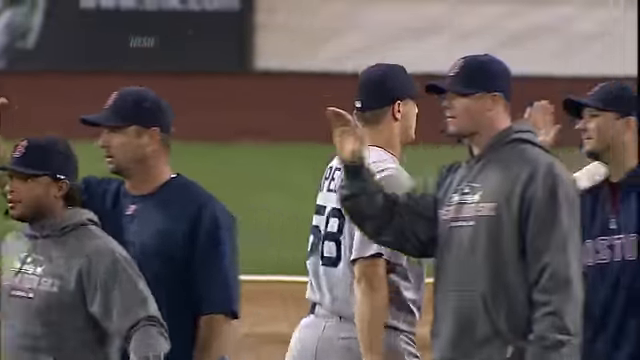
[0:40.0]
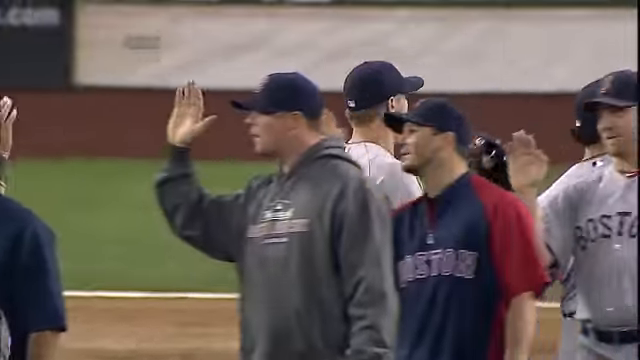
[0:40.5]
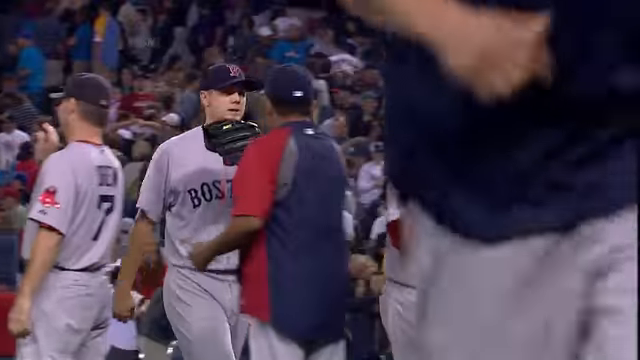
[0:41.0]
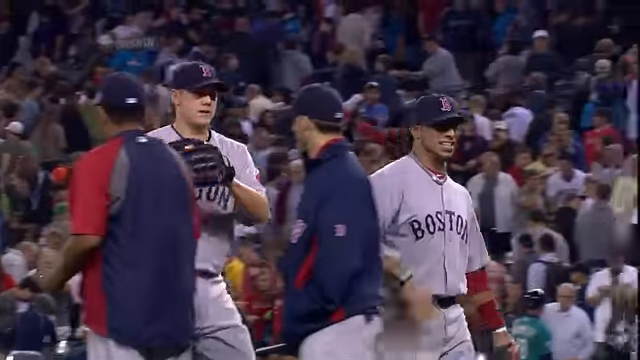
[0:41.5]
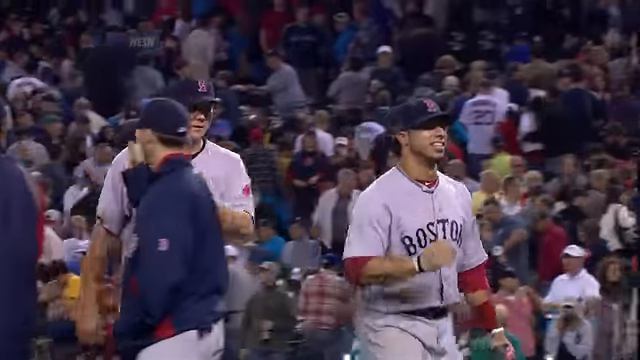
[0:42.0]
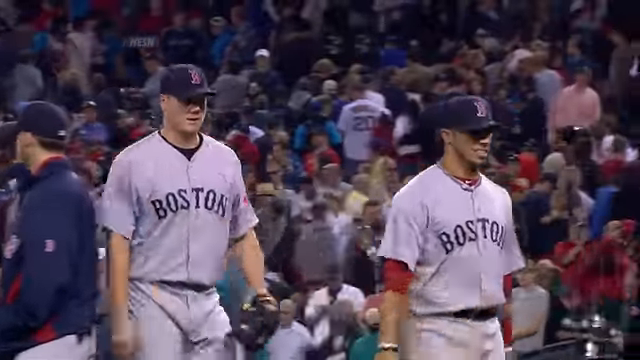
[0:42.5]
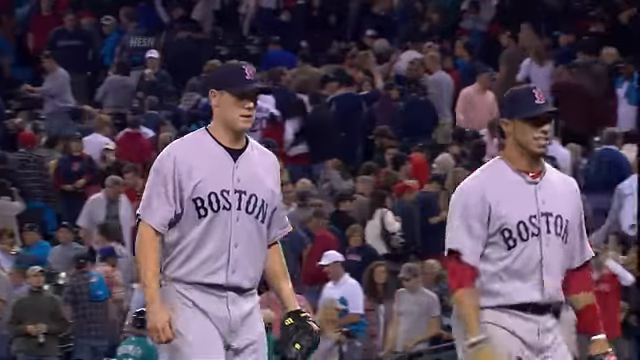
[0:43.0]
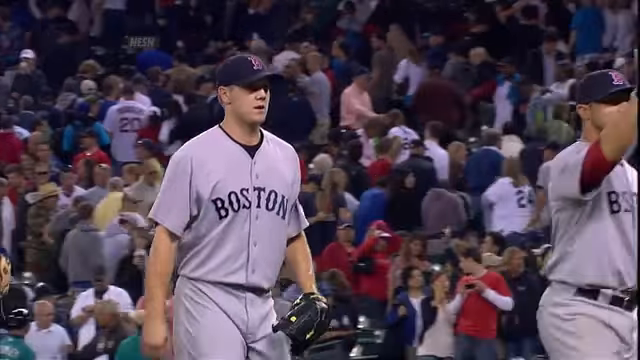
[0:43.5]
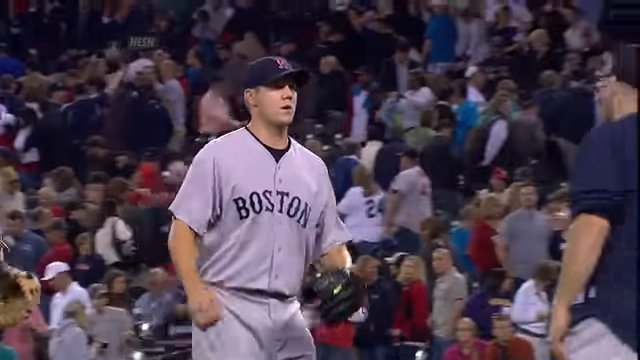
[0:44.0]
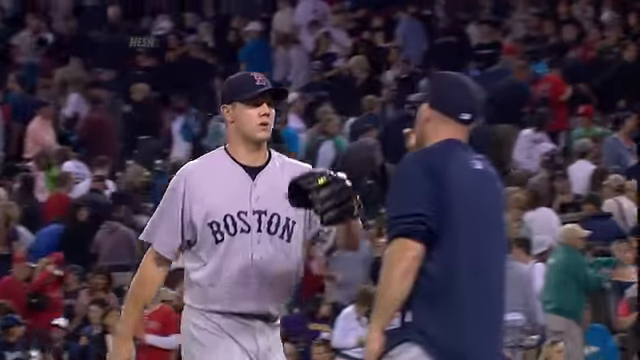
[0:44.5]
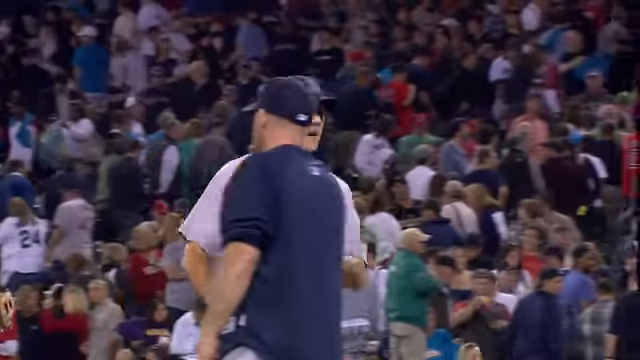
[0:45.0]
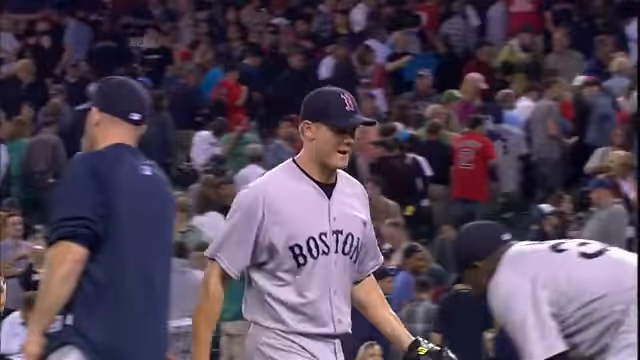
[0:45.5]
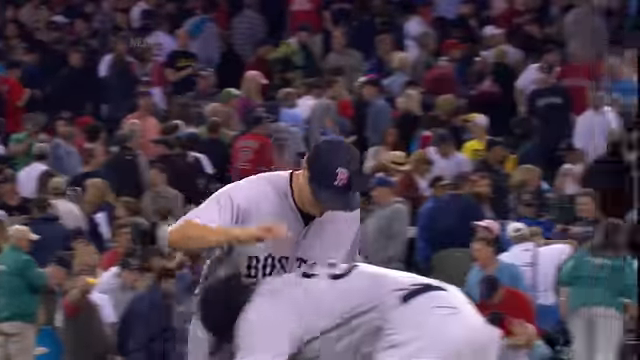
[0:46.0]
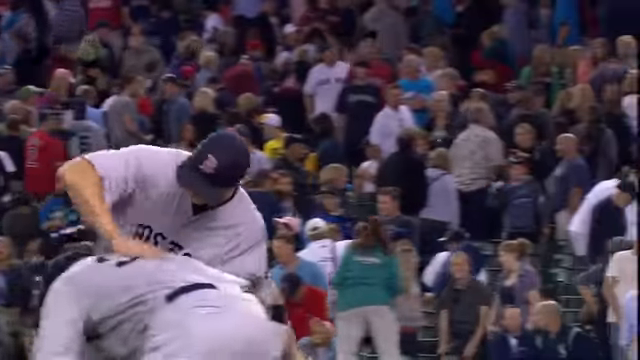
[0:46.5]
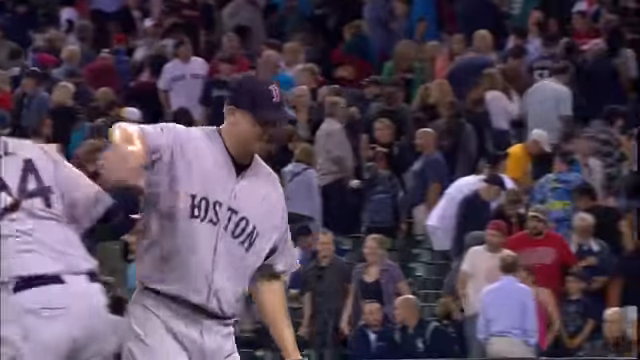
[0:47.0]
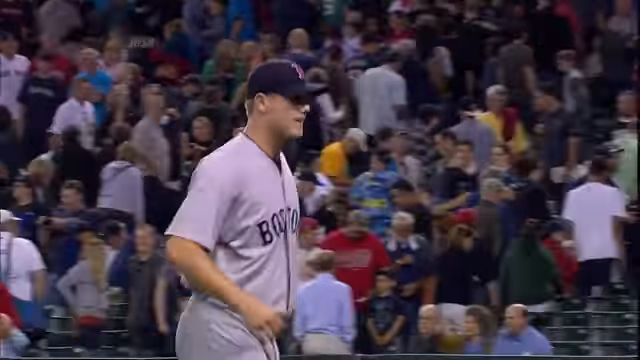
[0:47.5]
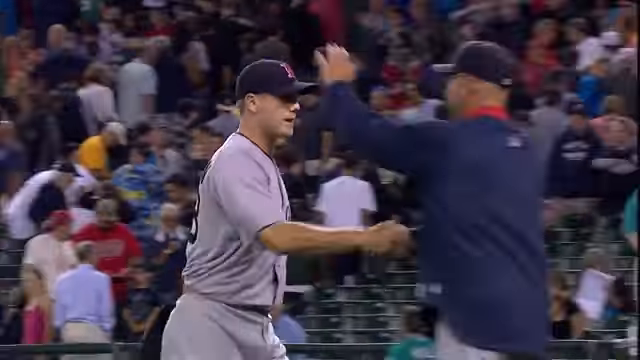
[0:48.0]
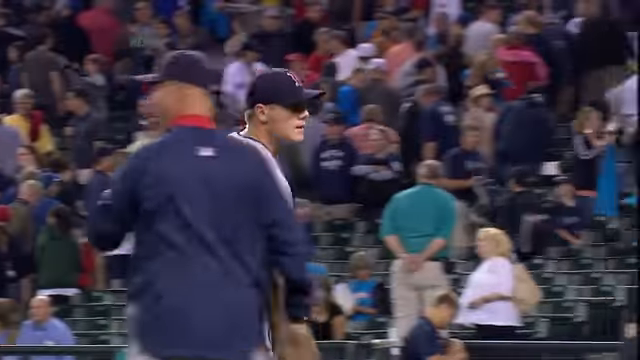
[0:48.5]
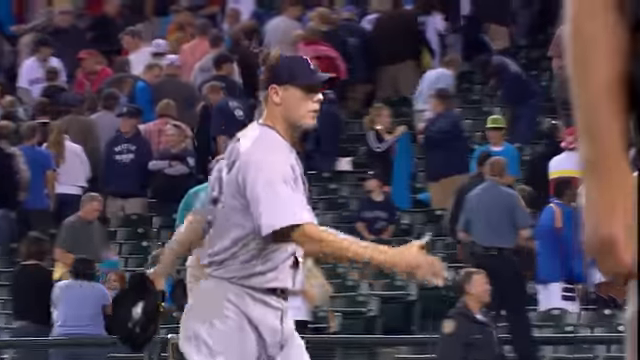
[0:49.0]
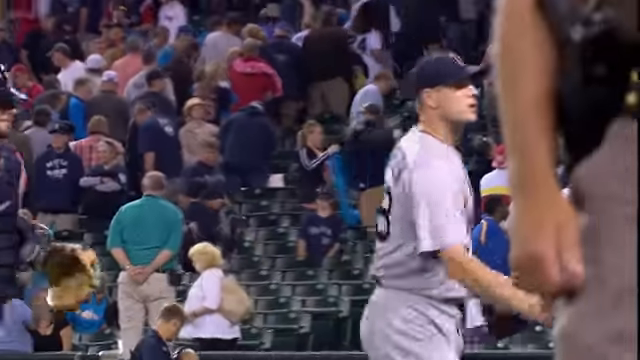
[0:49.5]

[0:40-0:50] The pitcher continues walking to the right side. The view changes to a lower, ground-level view of the pitcher and another Boston teammate walking to the right in a victory line, bumping hands with everyone they walk by. The pitcher pats the back of a teammate who is bending down, then shakes the hand of what looks like a coach. He keeps walking to the right and shakes someone else's hand with his right hand.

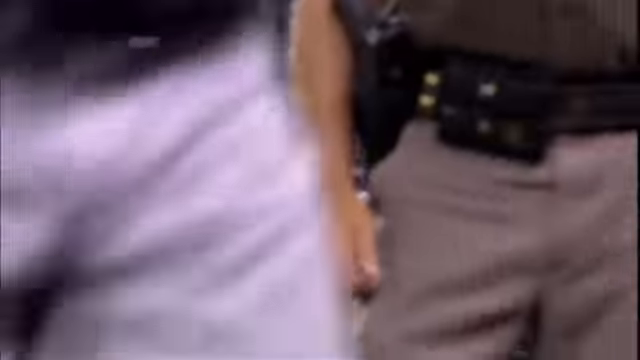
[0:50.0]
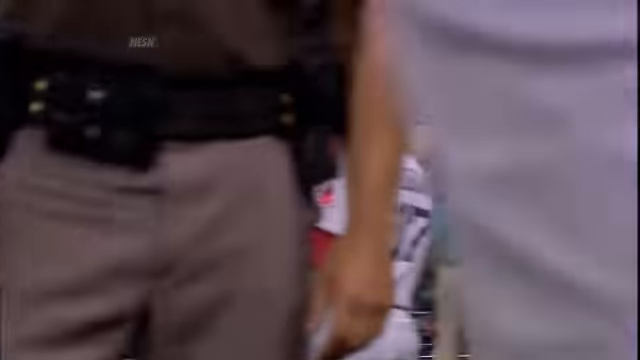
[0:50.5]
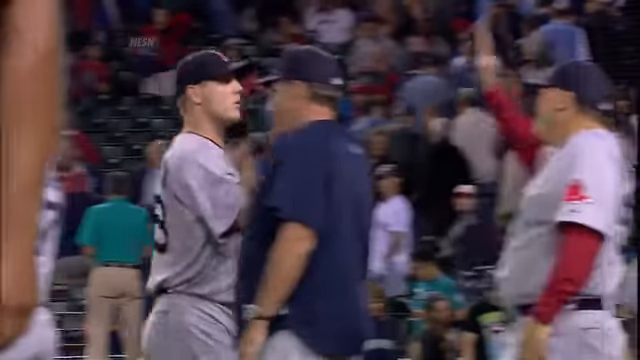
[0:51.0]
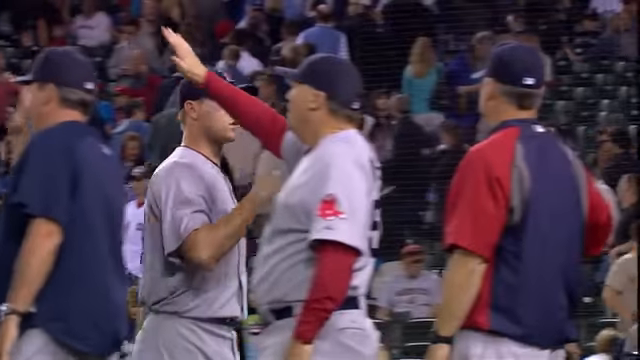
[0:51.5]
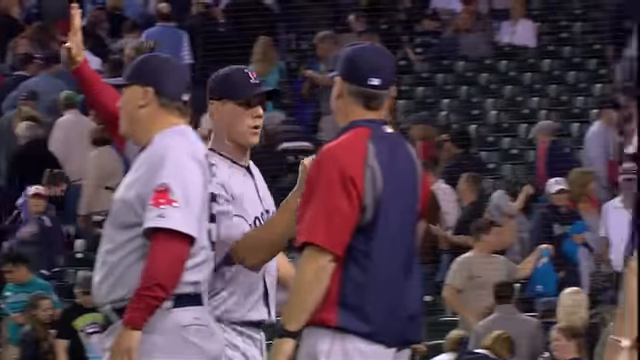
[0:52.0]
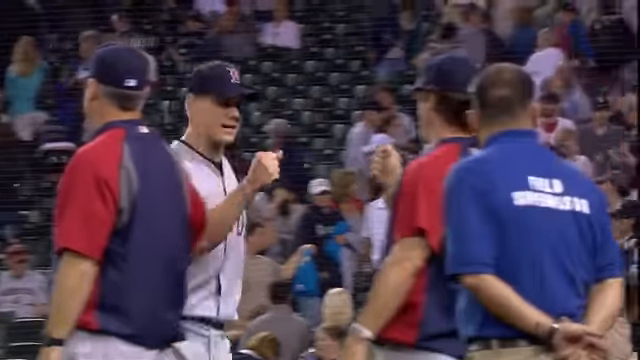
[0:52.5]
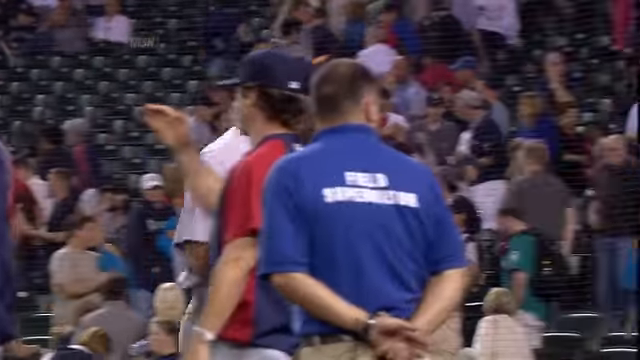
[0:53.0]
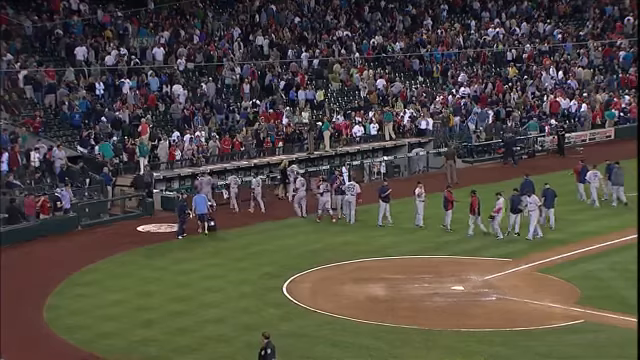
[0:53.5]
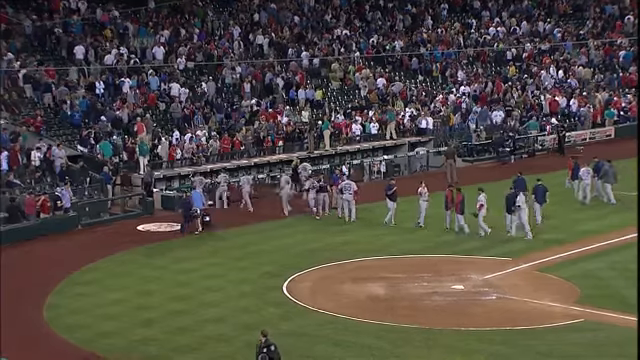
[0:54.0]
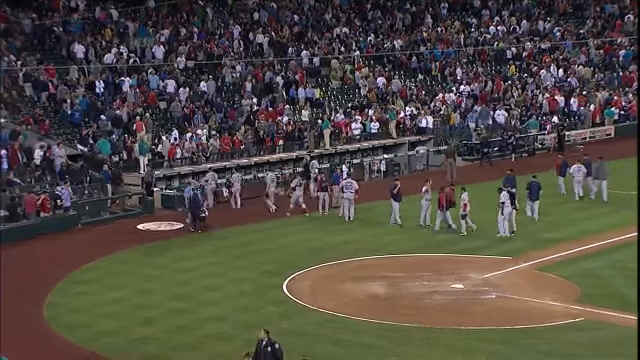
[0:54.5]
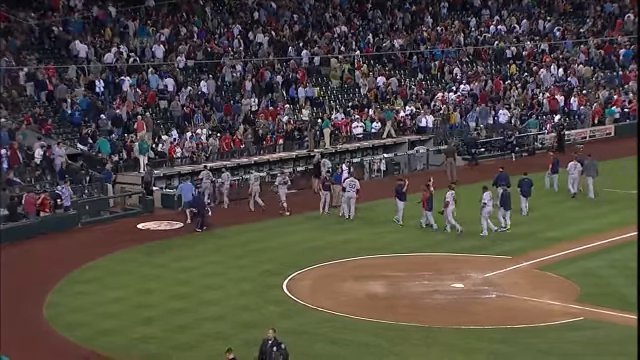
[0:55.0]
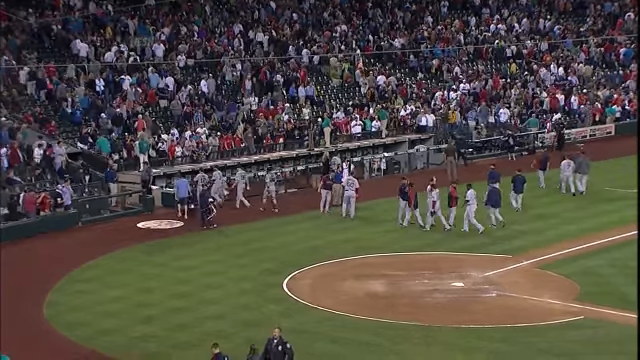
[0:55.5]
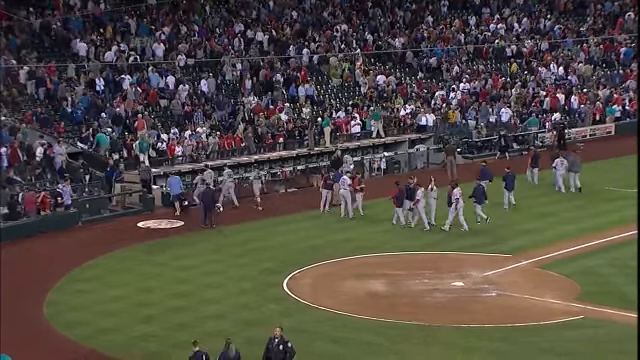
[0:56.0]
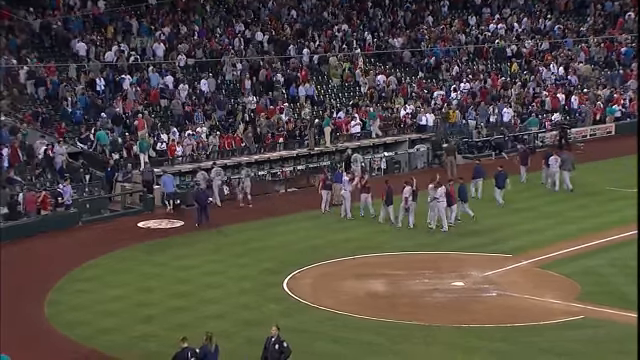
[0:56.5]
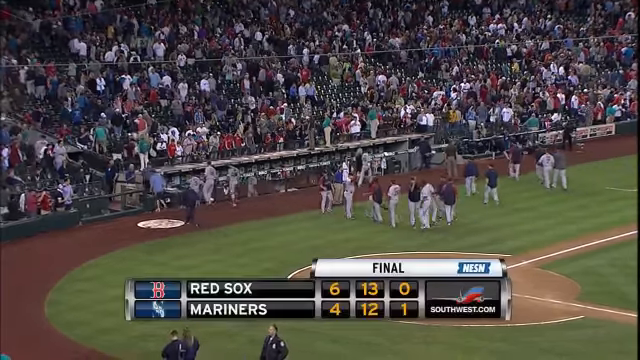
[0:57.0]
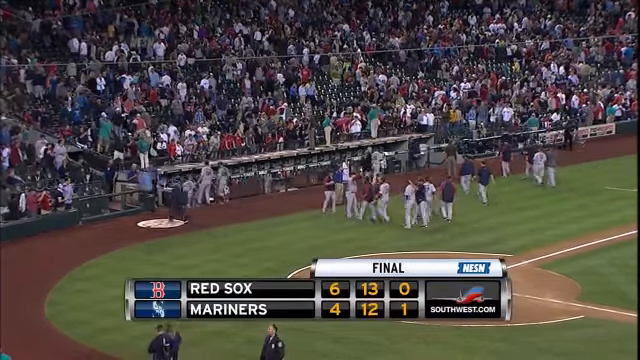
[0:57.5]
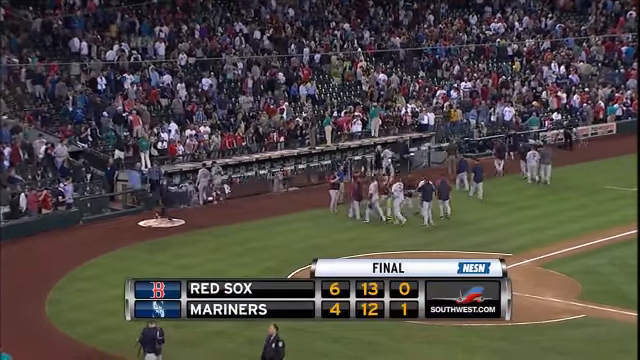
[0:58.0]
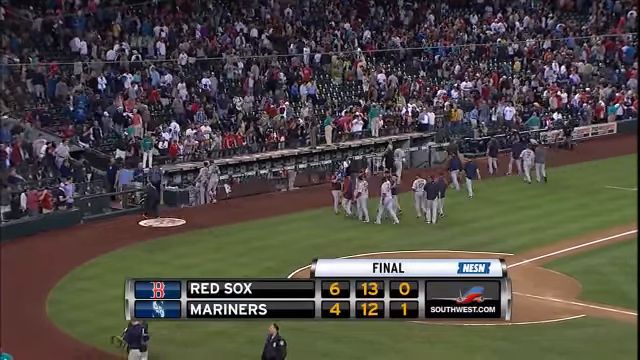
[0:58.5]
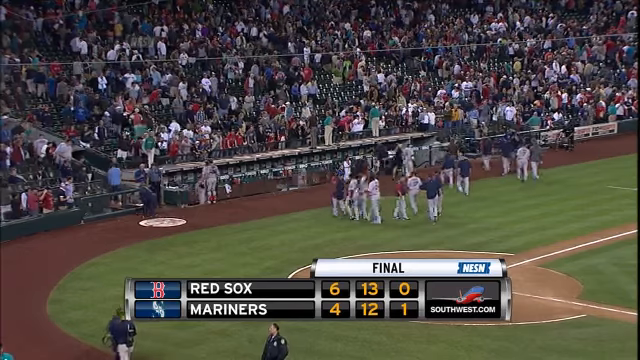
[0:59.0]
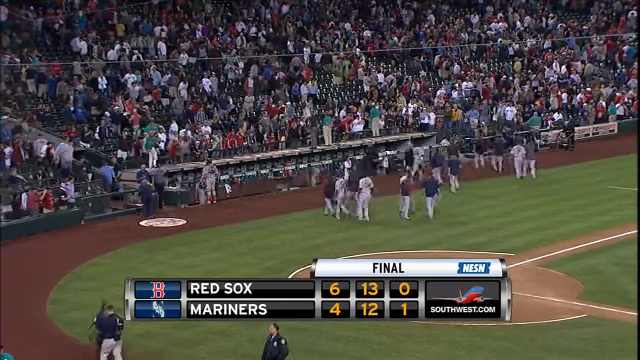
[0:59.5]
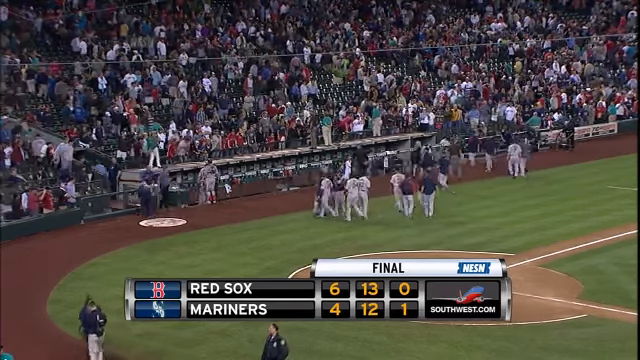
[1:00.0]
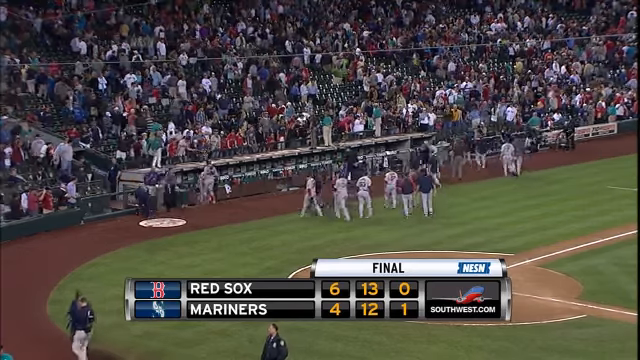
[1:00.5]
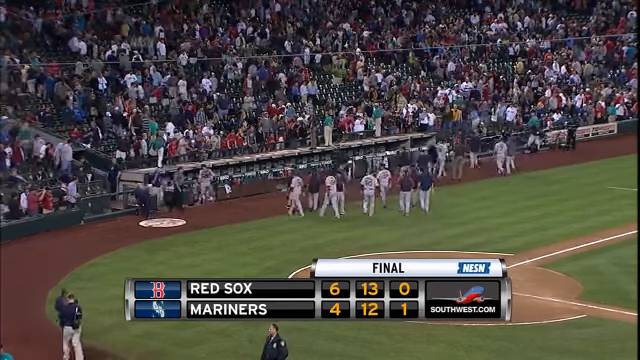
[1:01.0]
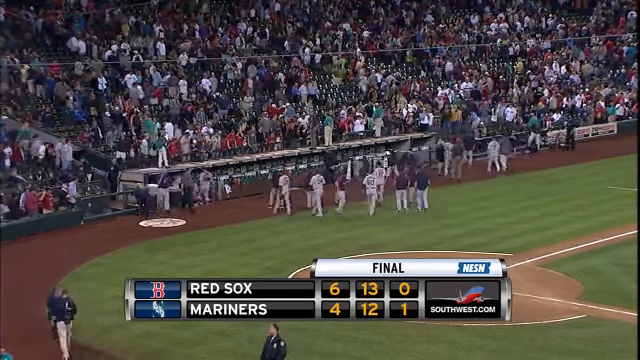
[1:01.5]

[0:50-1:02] The pitcher continues through the victory line, bumping hands with a coach or teammate and continuing to bump hands. The view changes to a zoomed-out, overhead view of the Boston Red Sox players in their victory line, and the team walks away into the dugout. The final score at the bottom again shows 6-4: the Boston Red Sox have defeated the Mariners. Above the dugout, spectators in the stands are leaving. This is a home game for the losing team, the Mariners.